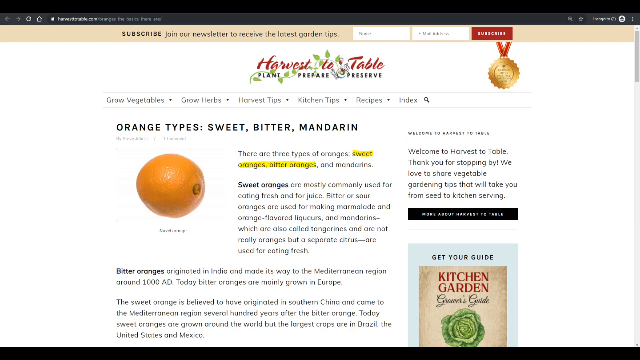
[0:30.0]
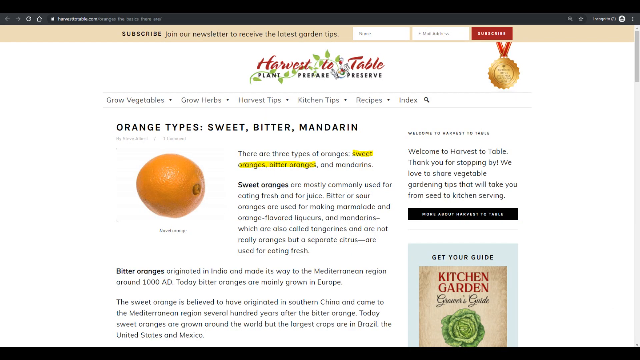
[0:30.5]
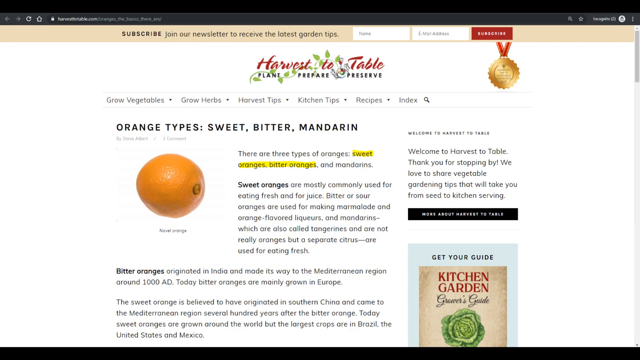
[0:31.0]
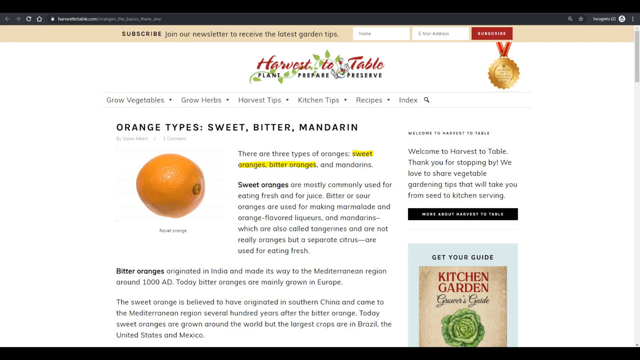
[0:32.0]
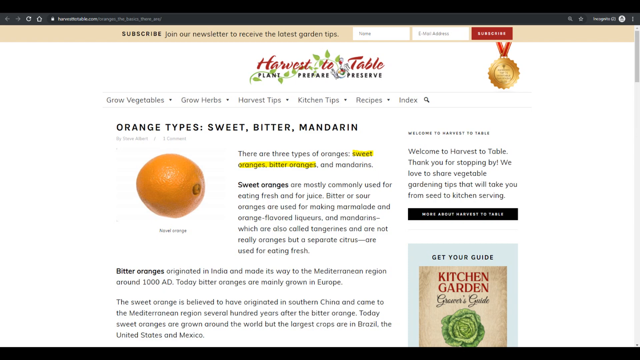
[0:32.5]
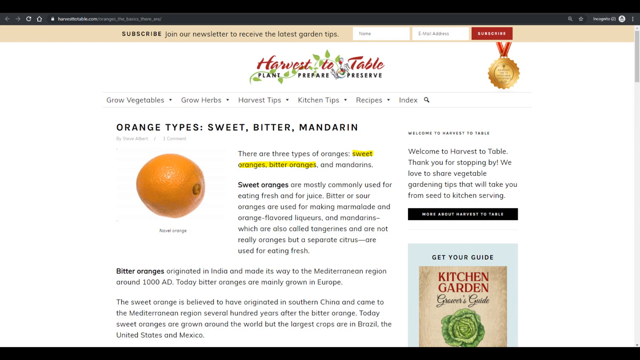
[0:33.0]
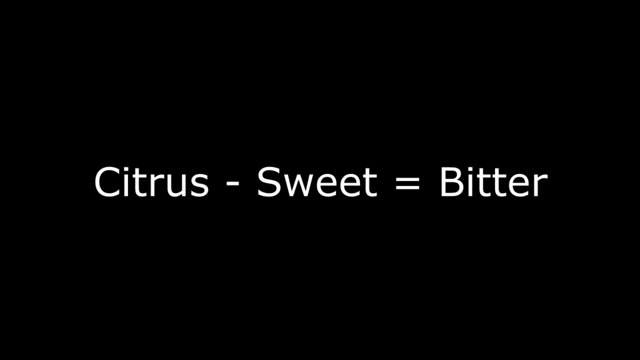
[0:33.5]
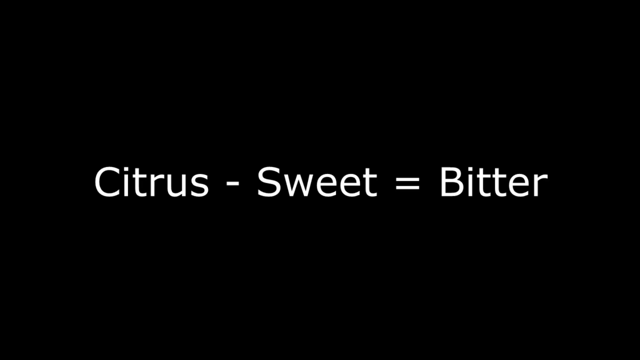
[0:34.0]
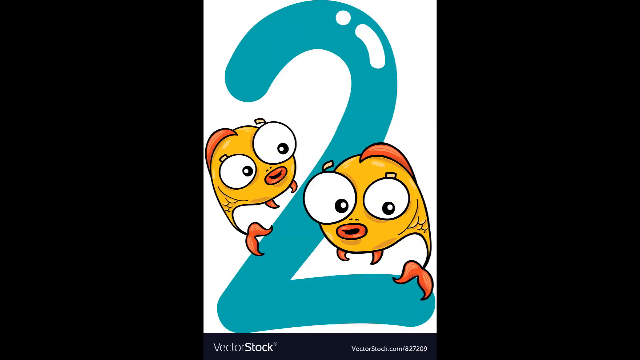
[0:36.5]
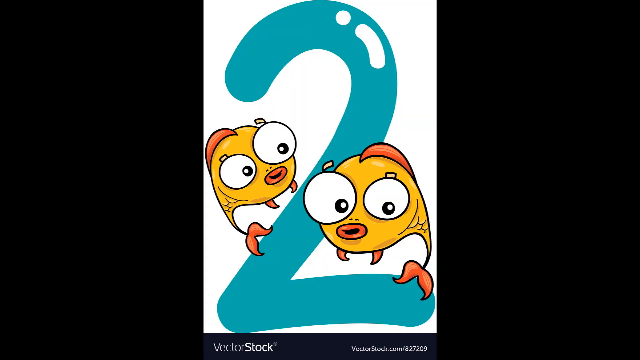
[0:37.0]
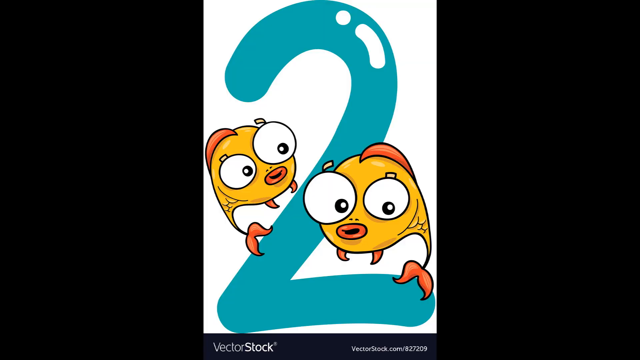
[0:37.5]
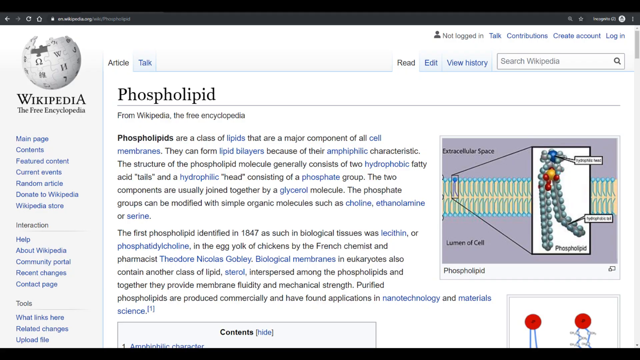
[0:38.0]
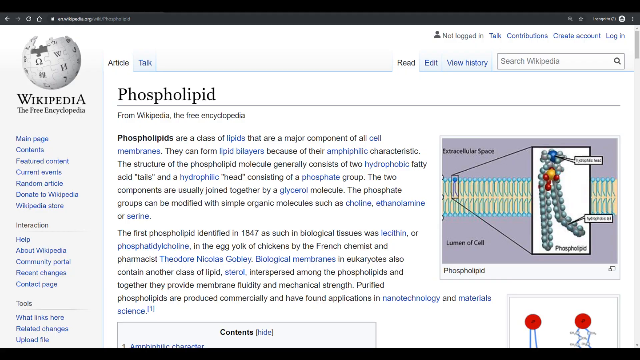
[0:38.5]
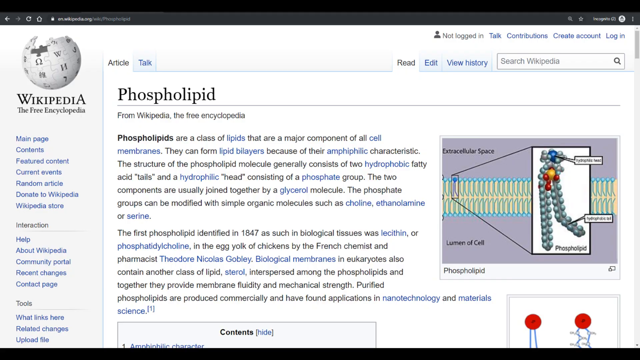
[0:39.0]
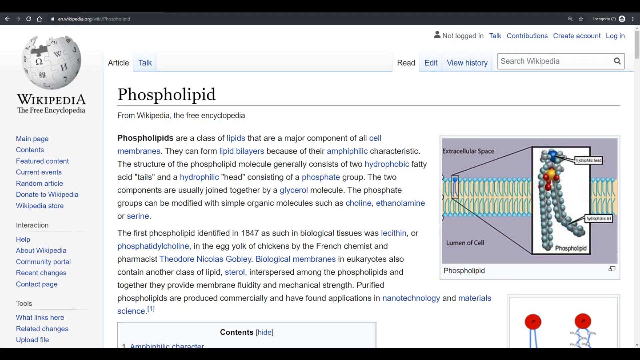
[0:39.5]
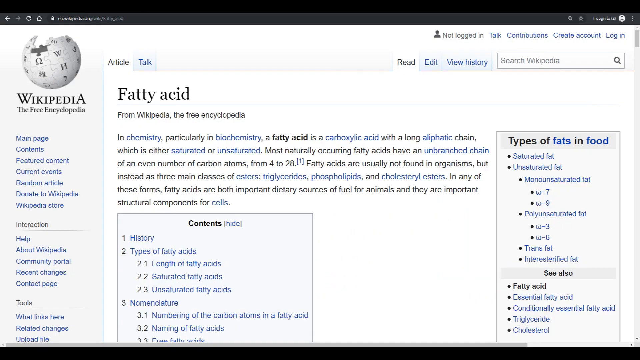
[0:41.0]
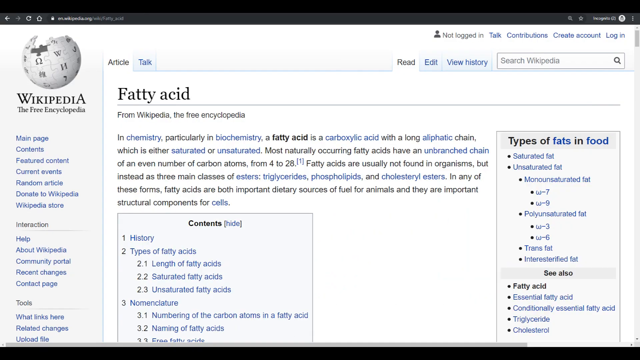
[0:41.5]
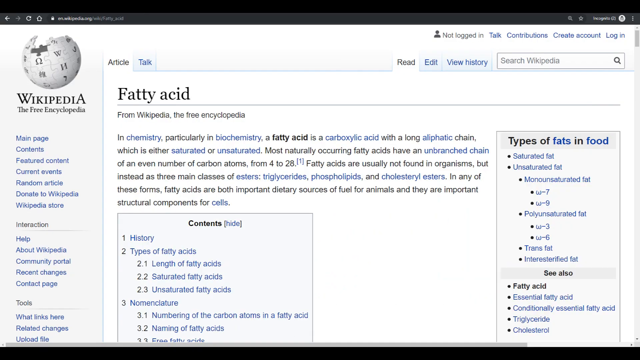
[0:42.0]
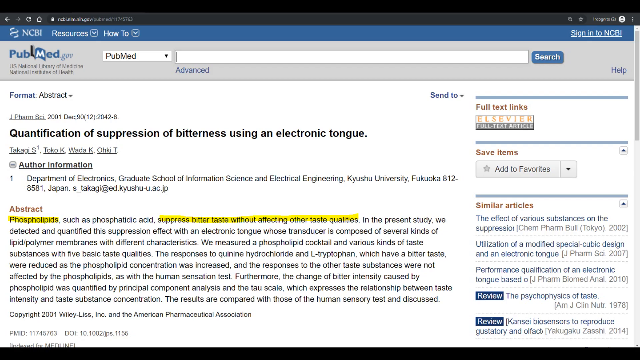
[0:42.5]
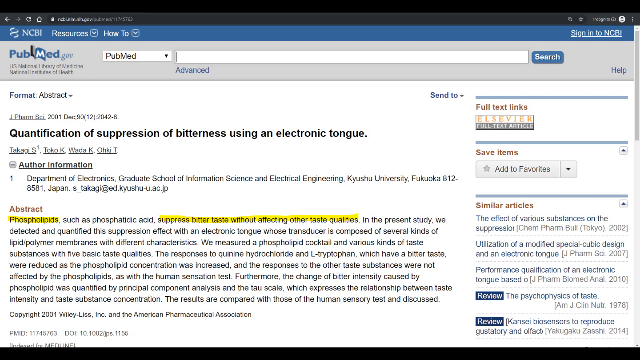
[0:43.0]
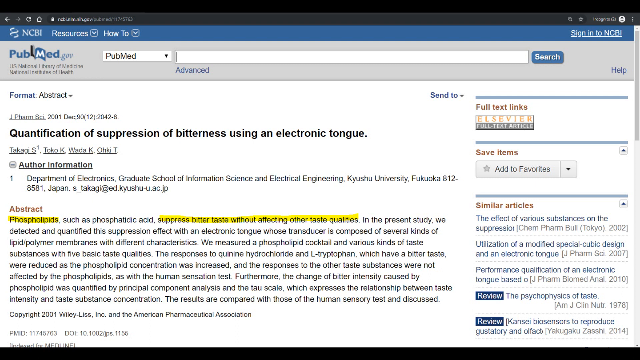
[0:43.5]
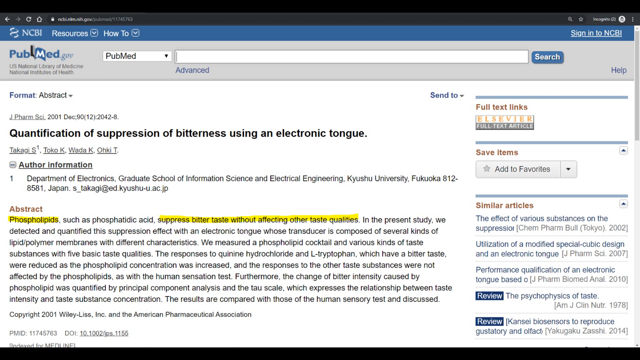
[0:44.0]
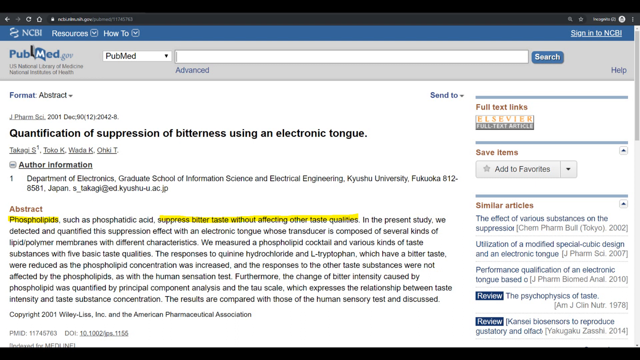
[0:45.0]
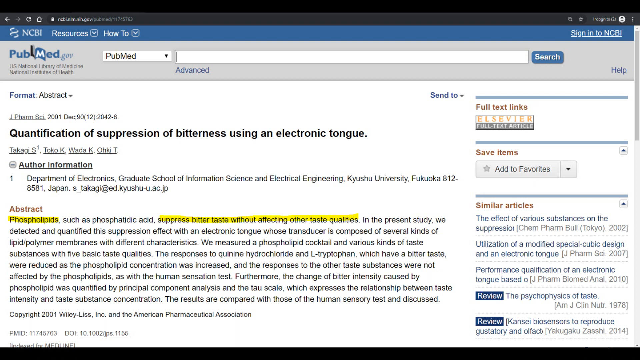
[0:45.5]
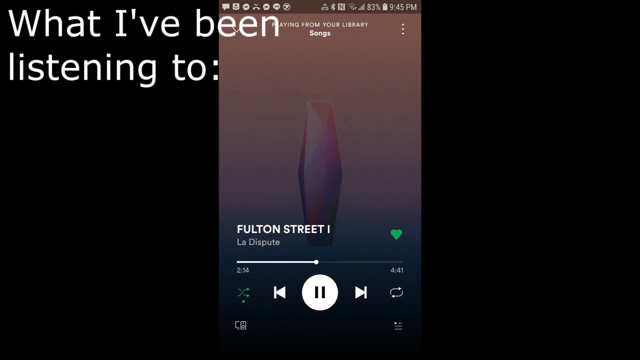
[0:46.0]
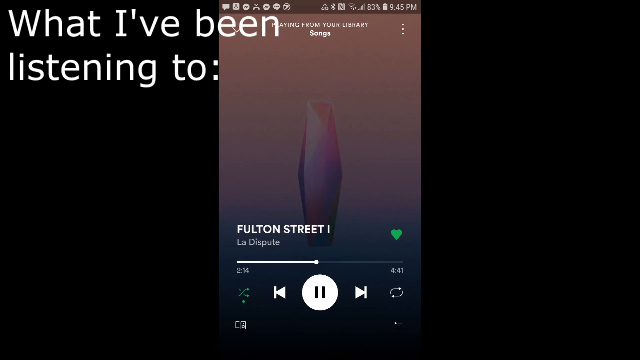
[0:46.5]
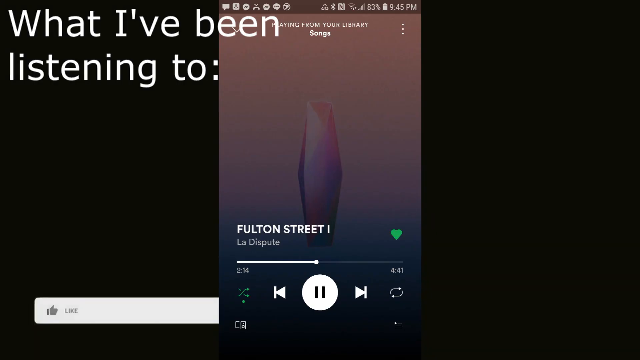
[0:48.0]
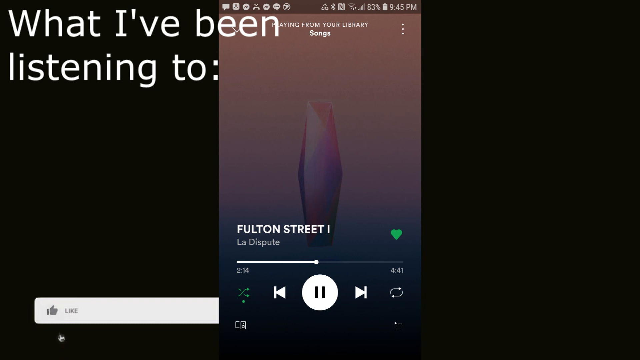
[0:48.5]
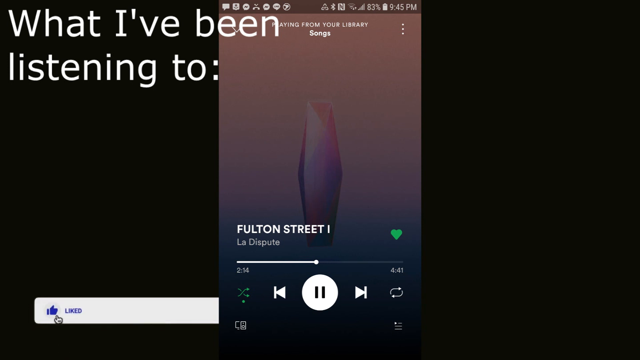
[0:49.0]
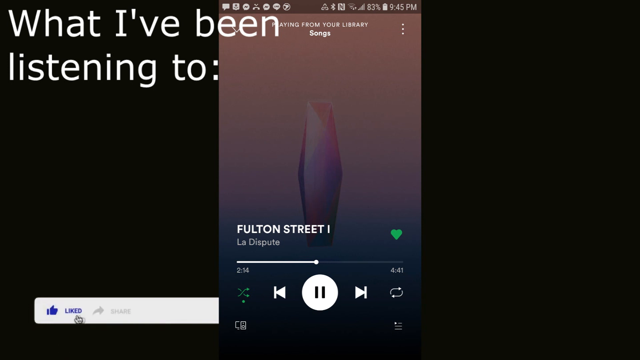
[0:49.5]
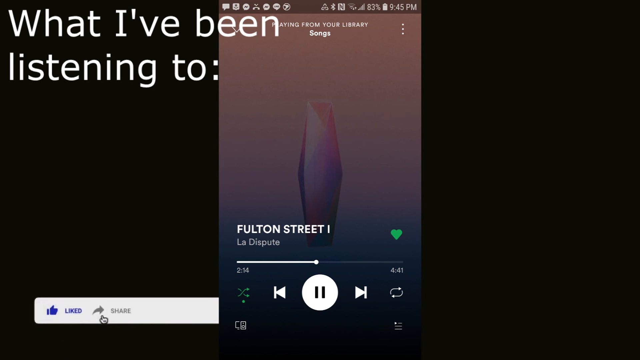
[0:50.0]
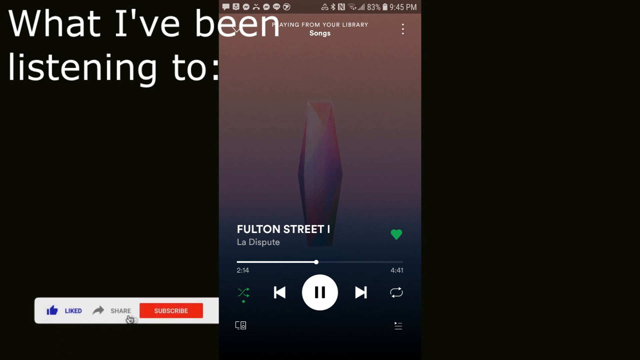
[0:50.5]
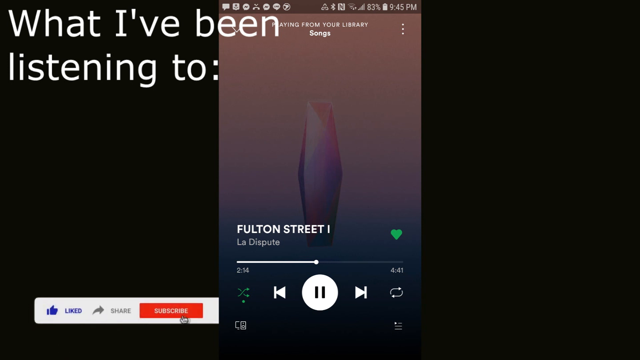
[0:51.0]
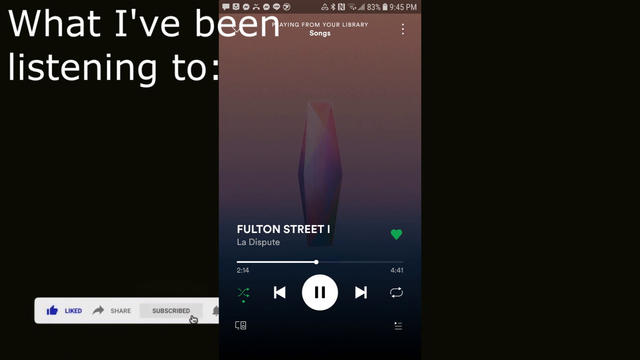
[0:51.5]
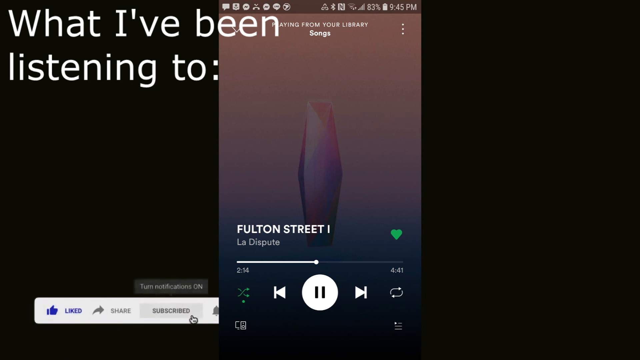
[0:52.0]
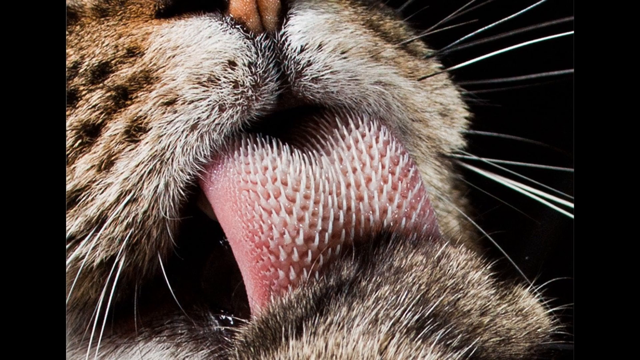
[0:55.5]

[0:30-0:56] The topic of sodium lauryl sulfate, or SLS, in toothpaste continues, covering how it blocks the sweet taste receptors on the tongue, with orange juice as an example. Types of oranges, sweet, bitter, and mandarin, are covered. Pictures such as a cat tongue appear.